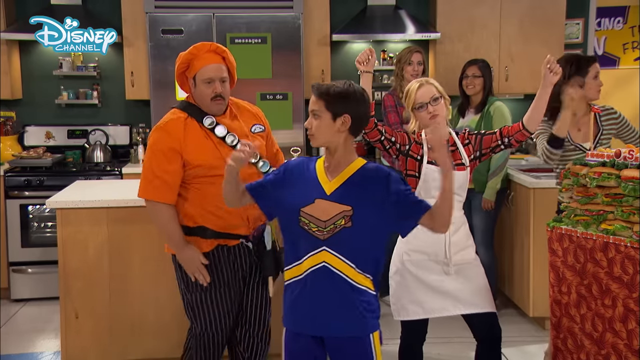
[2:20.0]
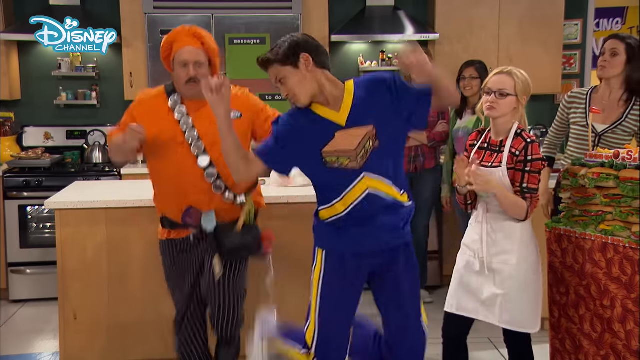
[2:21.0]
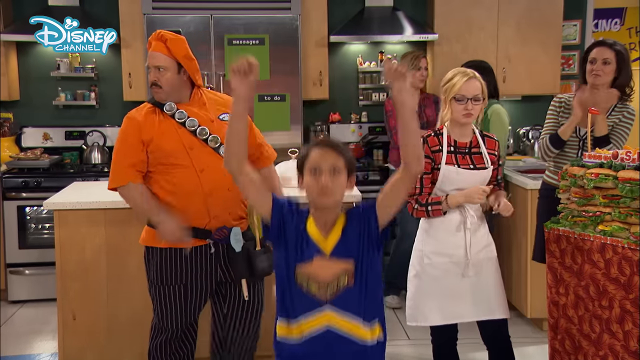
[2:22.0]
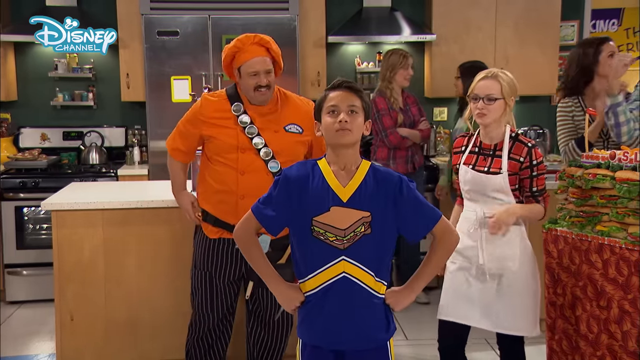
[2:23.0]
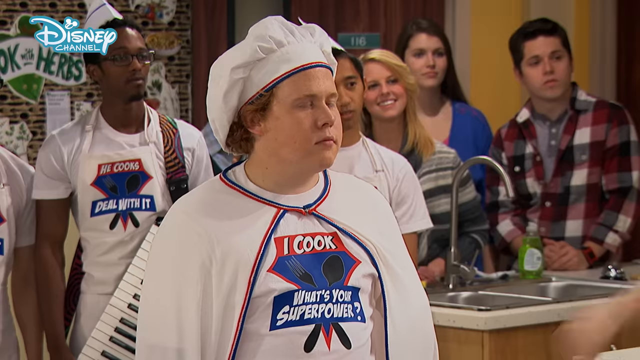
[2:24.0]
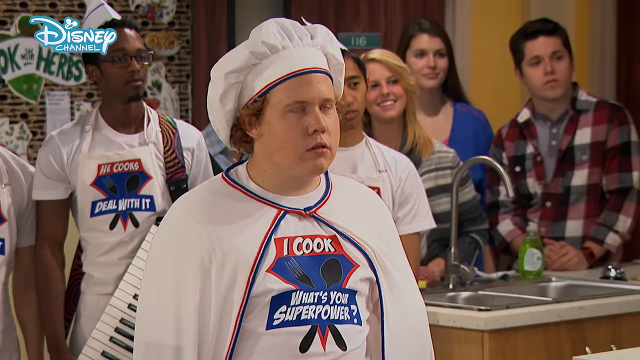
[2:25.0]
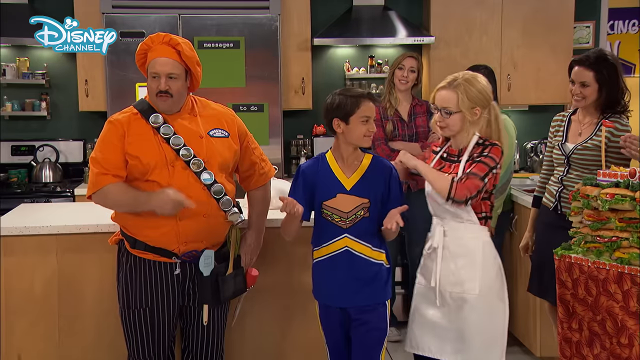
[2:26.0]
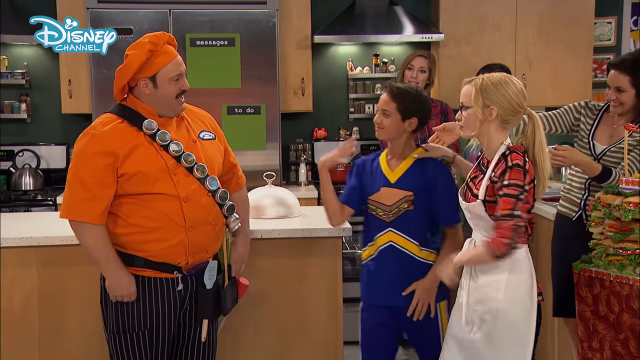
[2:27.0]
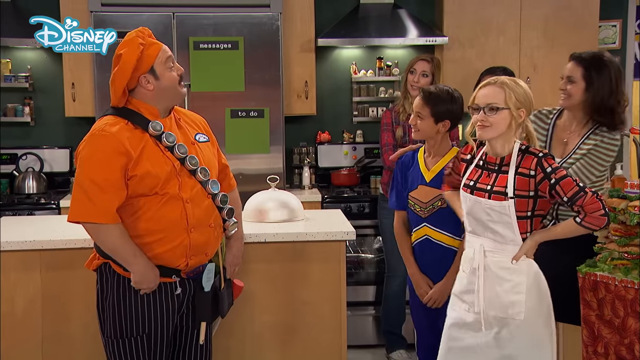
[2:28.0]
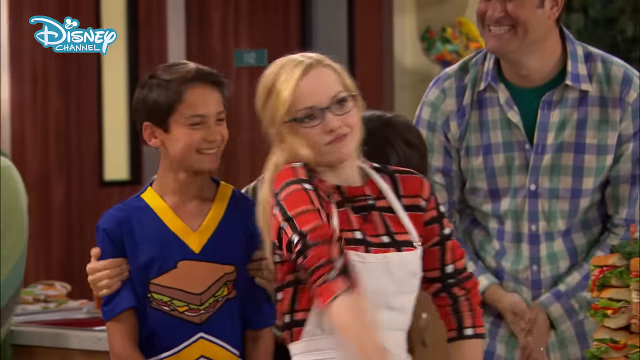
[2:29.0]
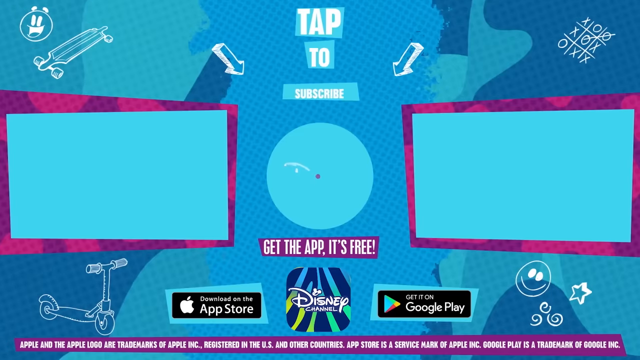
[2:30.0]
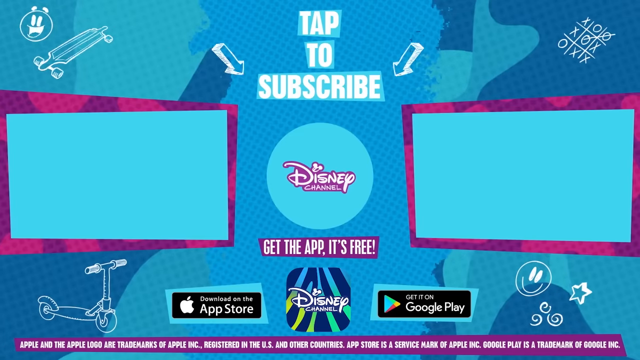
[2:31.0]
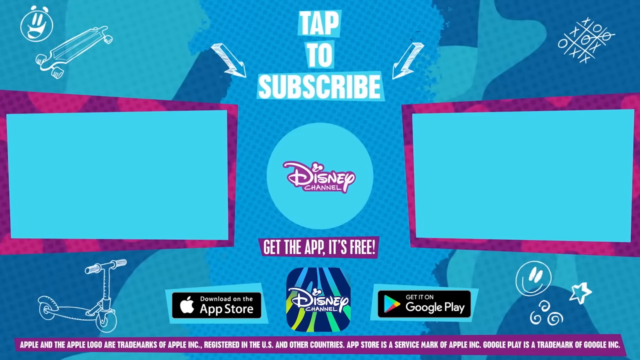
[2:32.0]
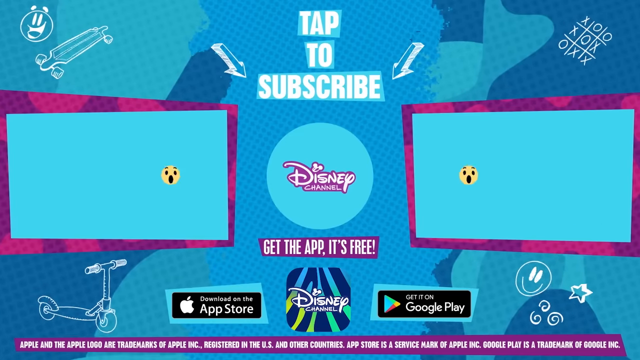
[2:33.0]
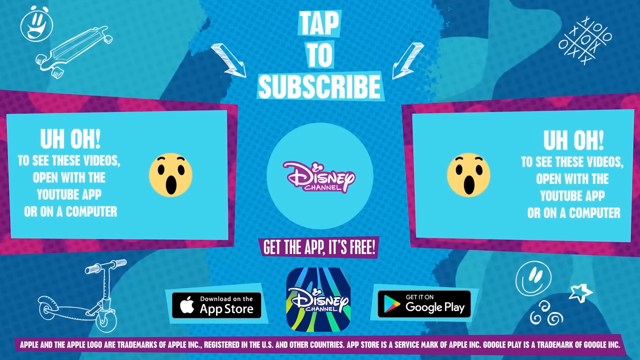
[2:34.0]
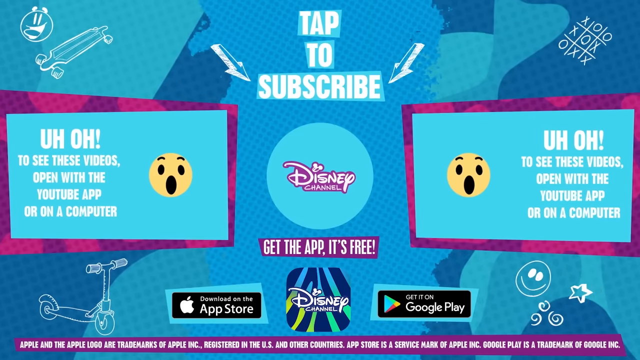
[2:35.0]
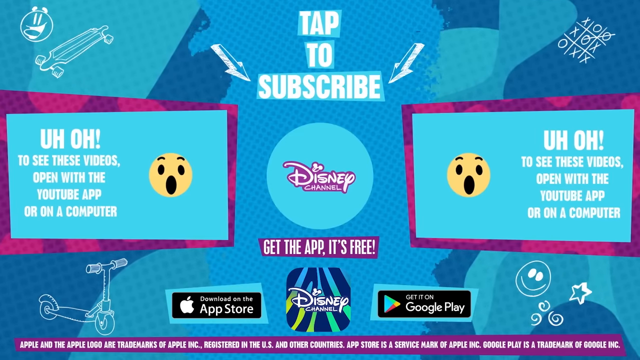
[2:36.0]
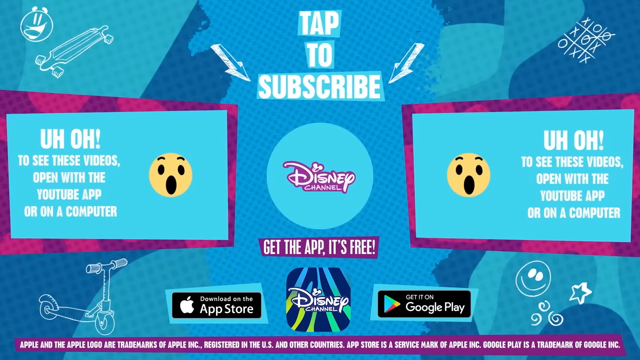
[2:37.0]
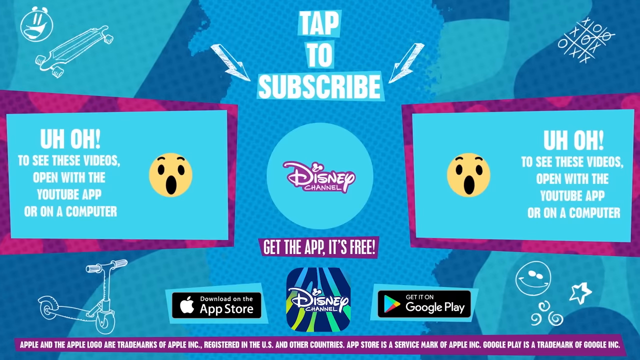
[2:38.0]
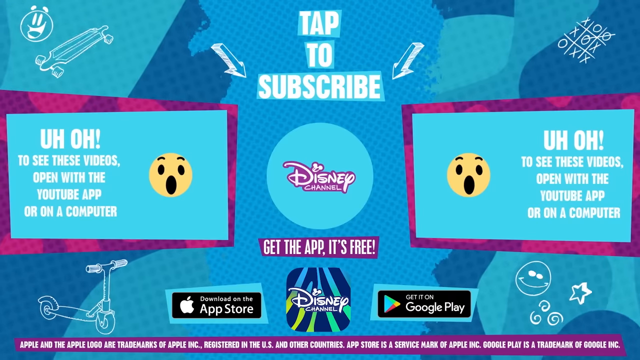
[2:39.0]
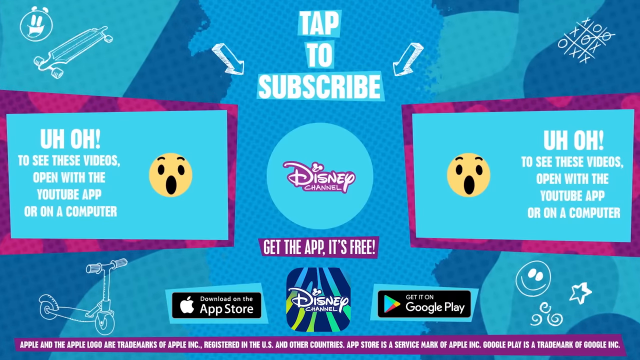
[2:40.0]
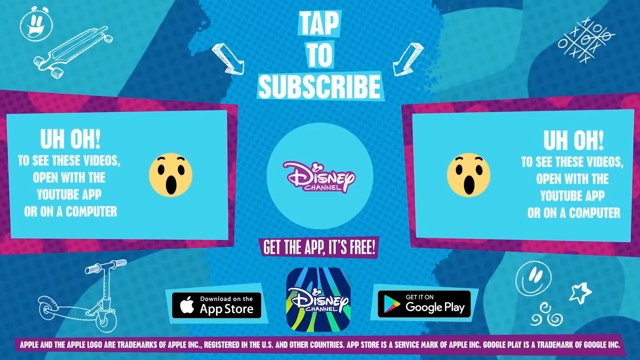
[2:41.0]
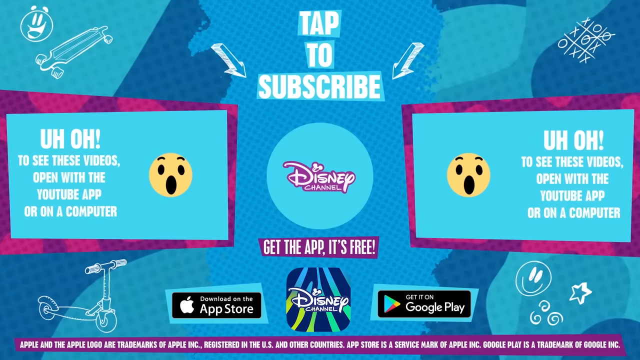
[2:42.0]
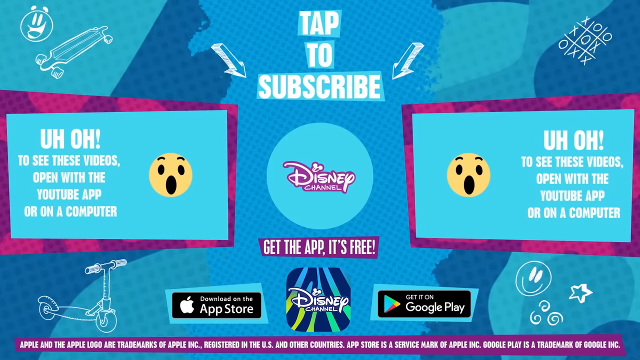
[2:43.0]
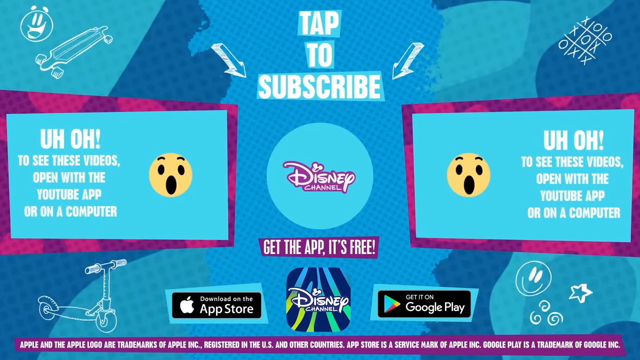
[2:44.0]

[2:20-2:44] A boy acts like a cheerleader, jumping, and then high-fives the girl named Maddie. He wears a blue top with yellow in the middle and yellow at the collar, with a picture of a sandwich in the middle of his shirt. He, Maddie and the chef dance around after she brings out the football stadium made of food, which looks like it stands on top of a red table with a leaf design on it. Three other people watch the others dance: one looks like an older woman, and the other two look like teenage girls who were not competing in the contest. Then a screen says "tap to subscribe Disney Channel" and also "uh-oh, to see these videos open with the YouTube app".